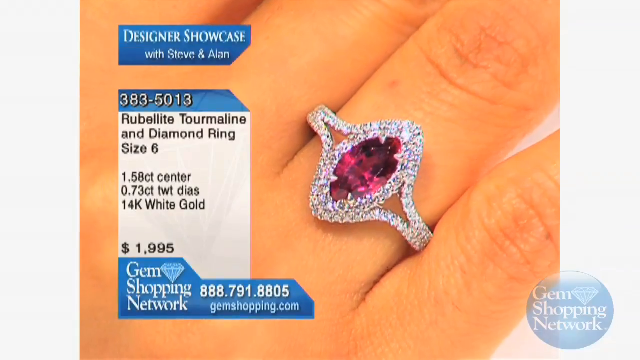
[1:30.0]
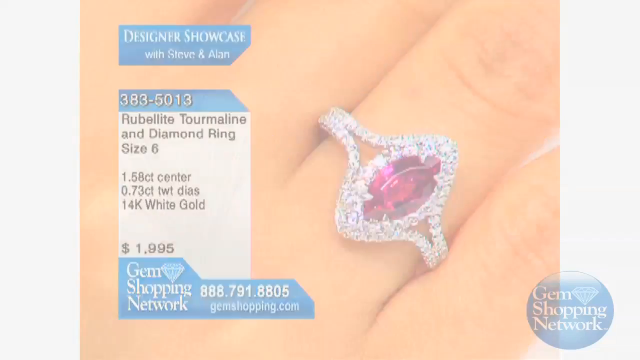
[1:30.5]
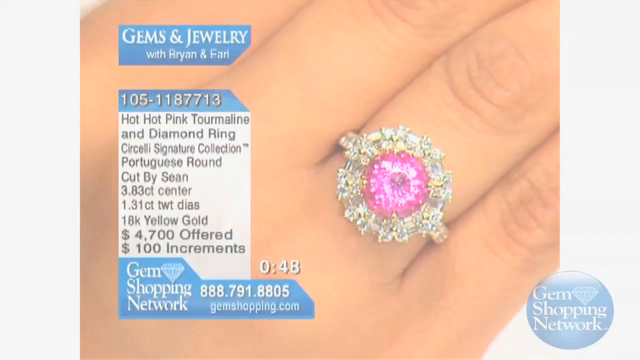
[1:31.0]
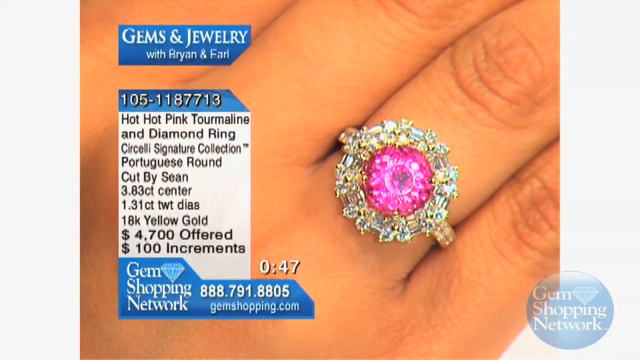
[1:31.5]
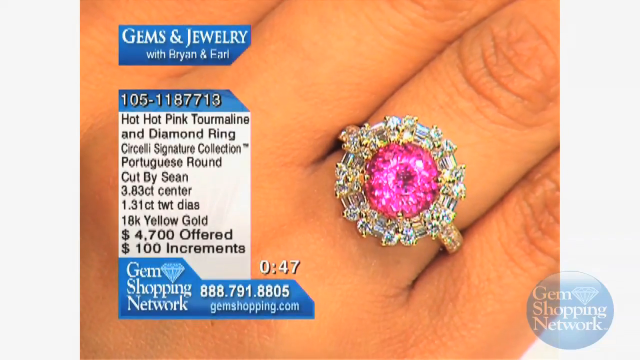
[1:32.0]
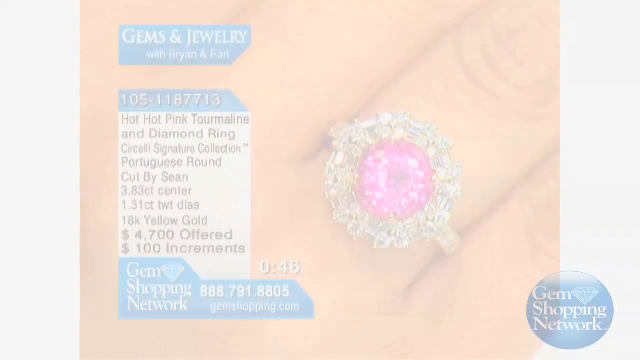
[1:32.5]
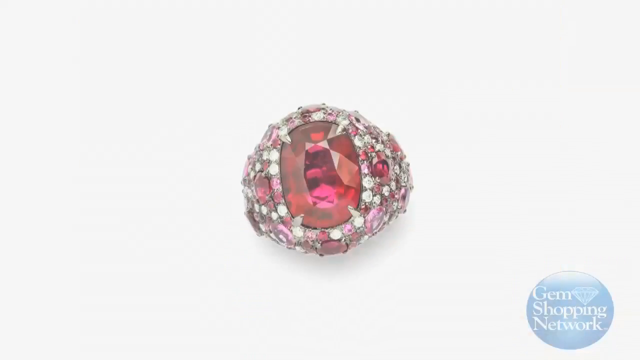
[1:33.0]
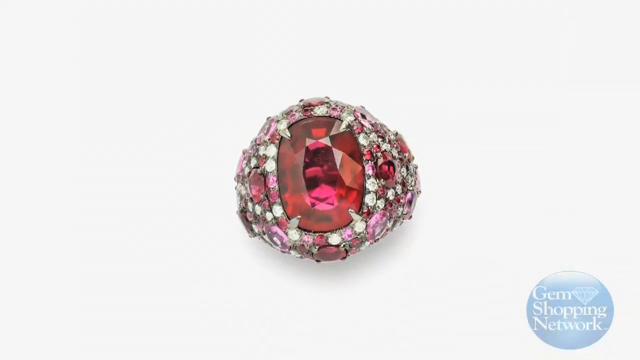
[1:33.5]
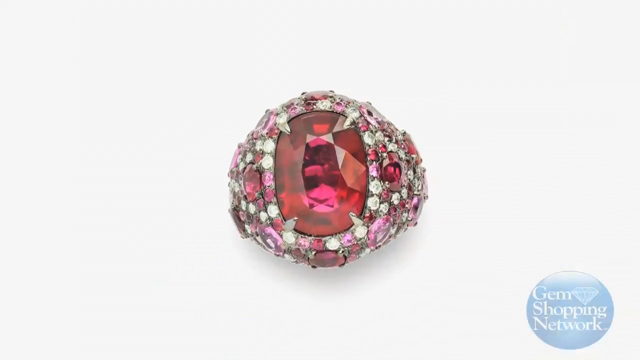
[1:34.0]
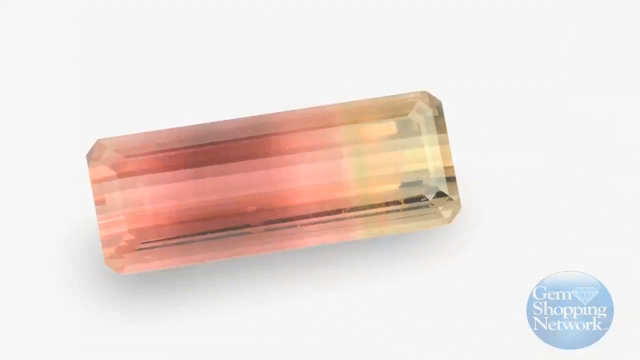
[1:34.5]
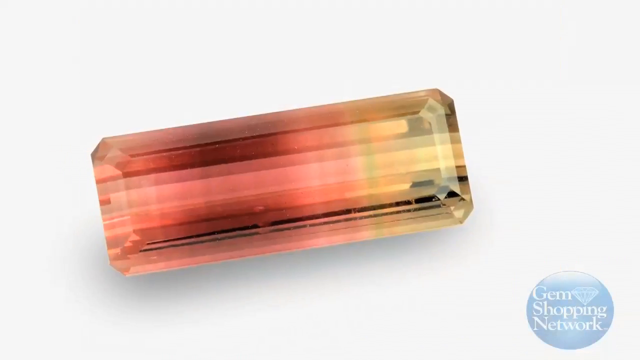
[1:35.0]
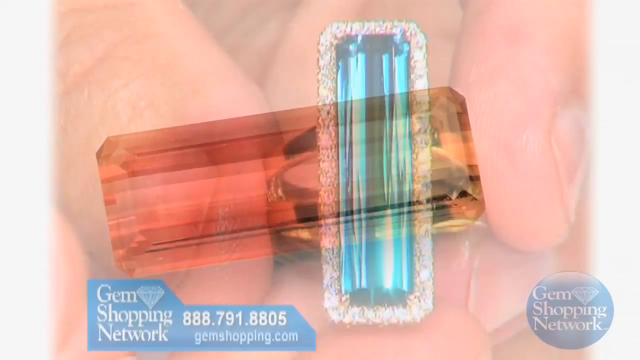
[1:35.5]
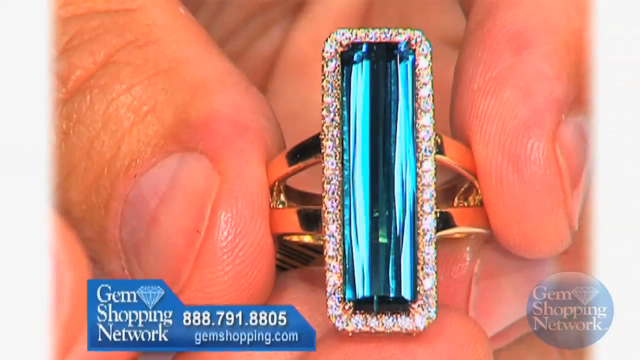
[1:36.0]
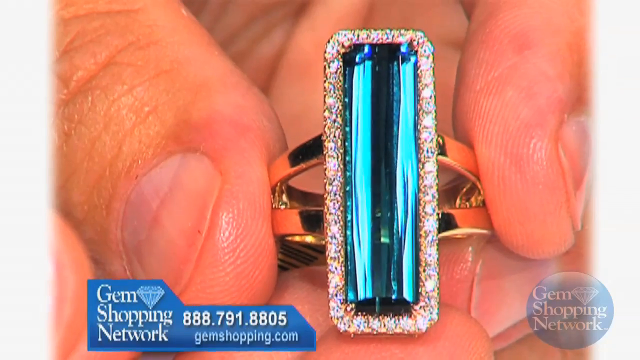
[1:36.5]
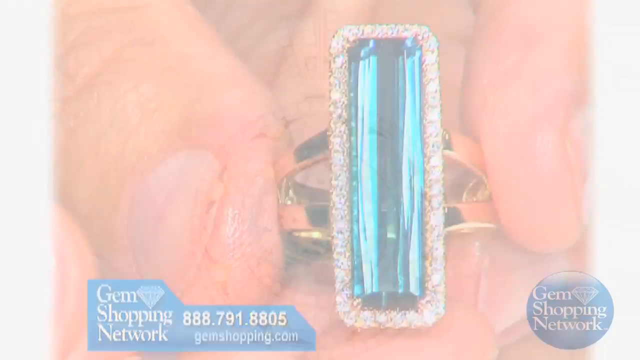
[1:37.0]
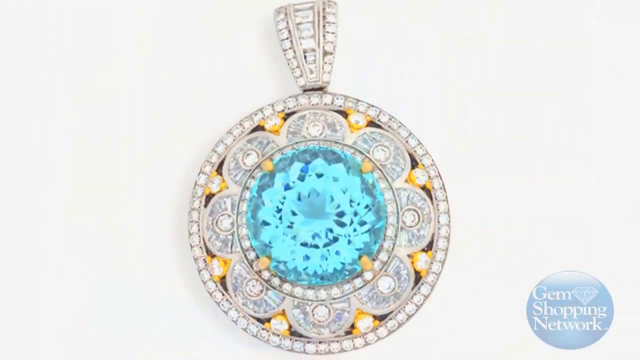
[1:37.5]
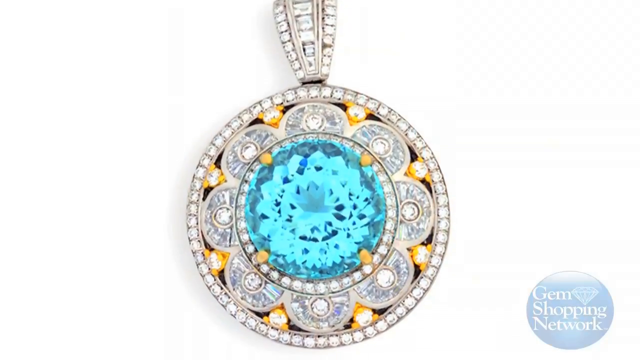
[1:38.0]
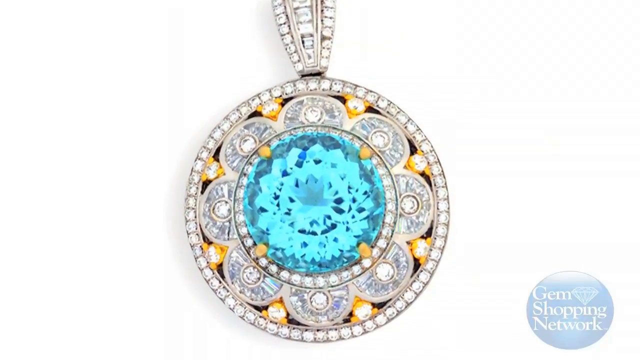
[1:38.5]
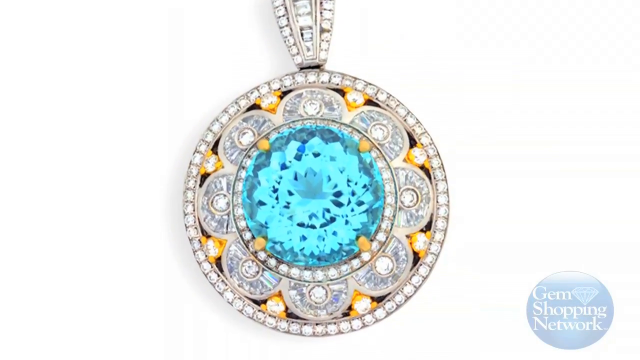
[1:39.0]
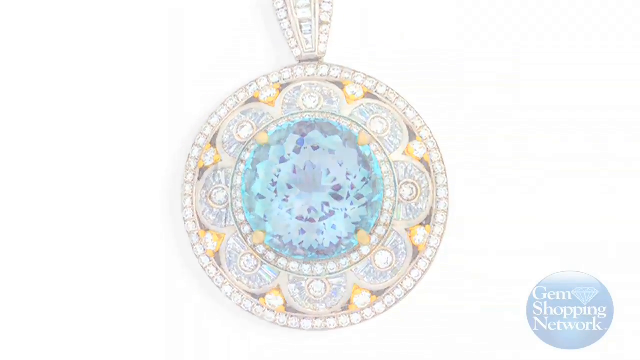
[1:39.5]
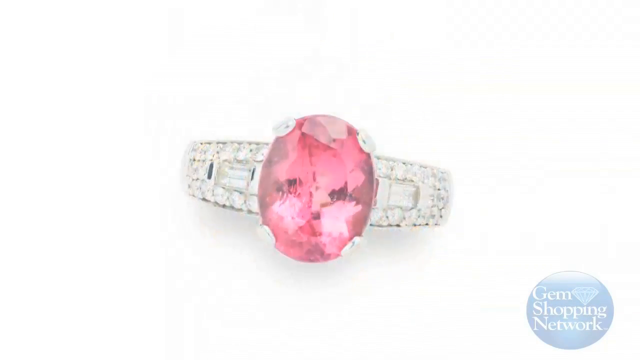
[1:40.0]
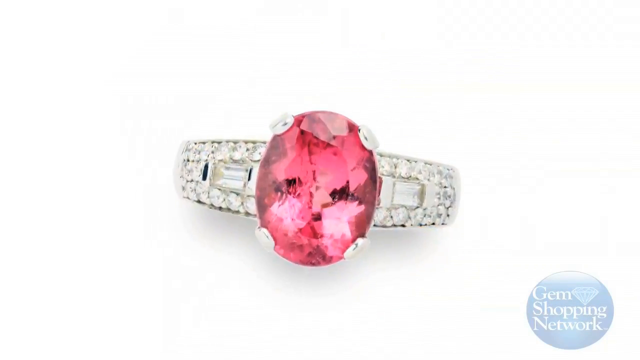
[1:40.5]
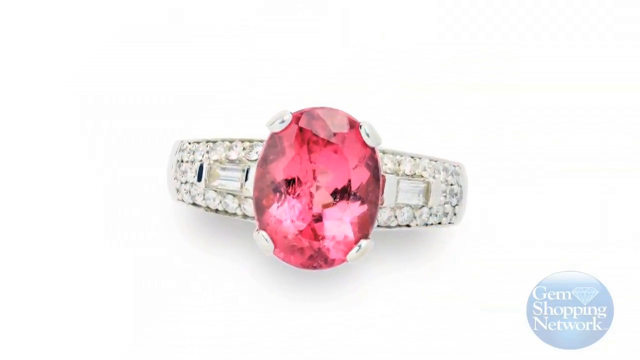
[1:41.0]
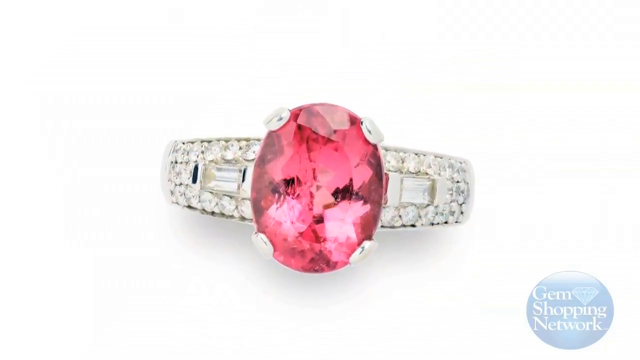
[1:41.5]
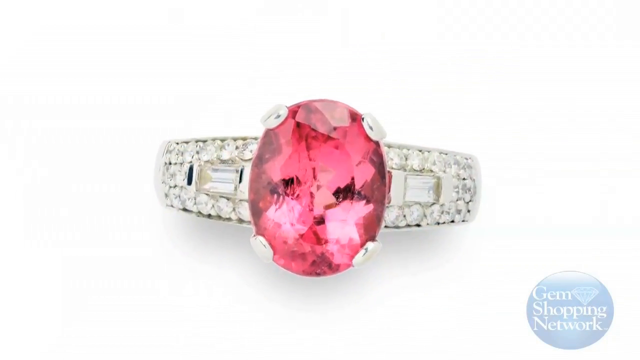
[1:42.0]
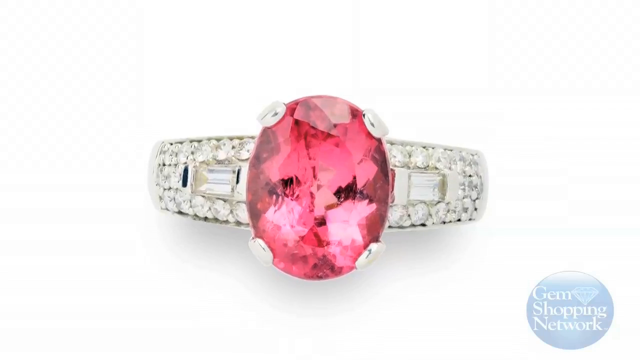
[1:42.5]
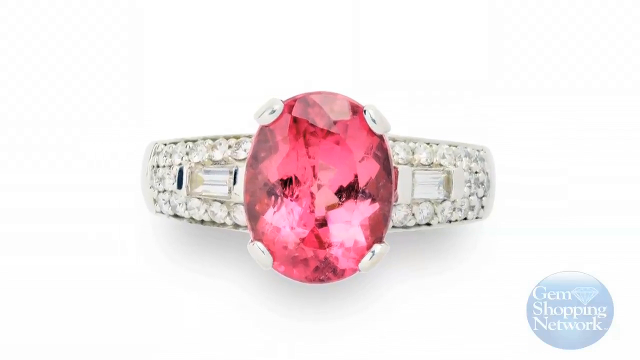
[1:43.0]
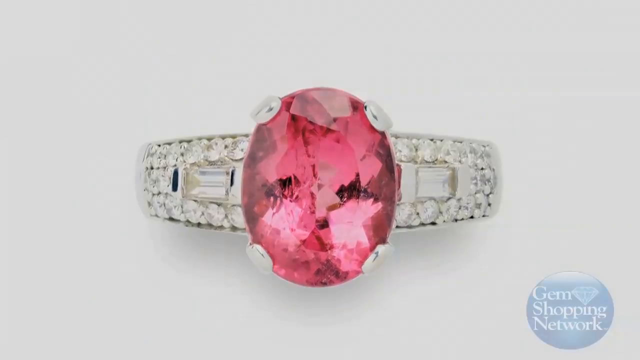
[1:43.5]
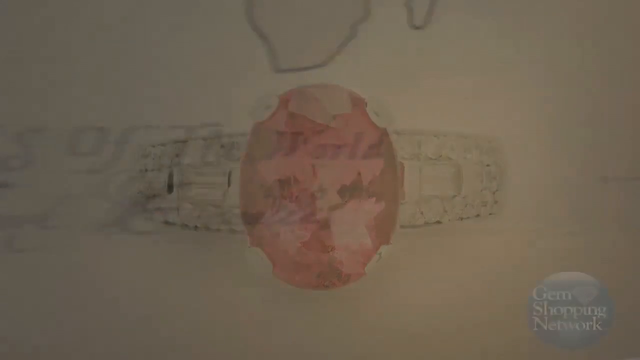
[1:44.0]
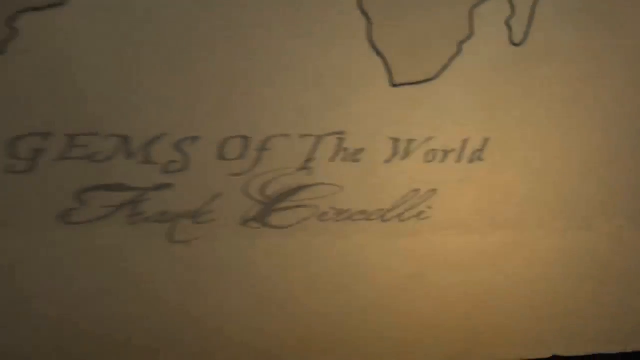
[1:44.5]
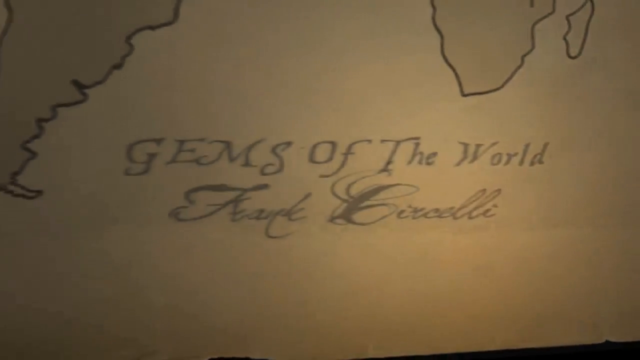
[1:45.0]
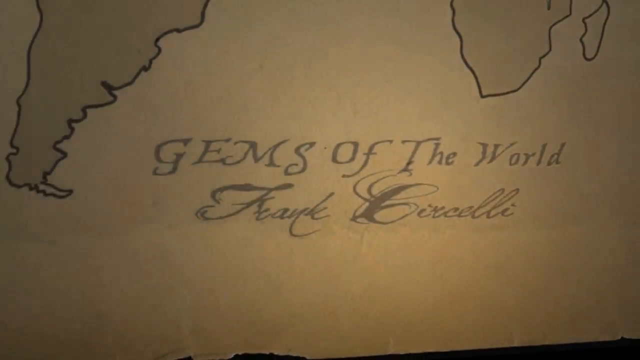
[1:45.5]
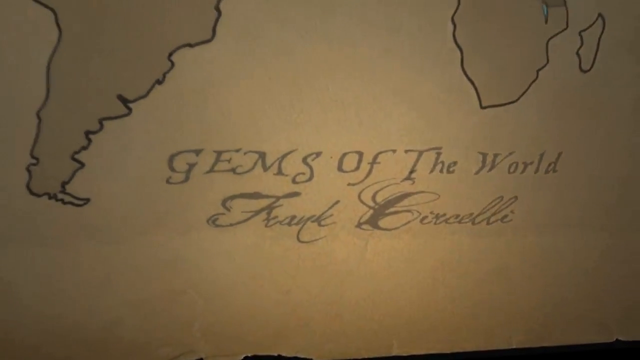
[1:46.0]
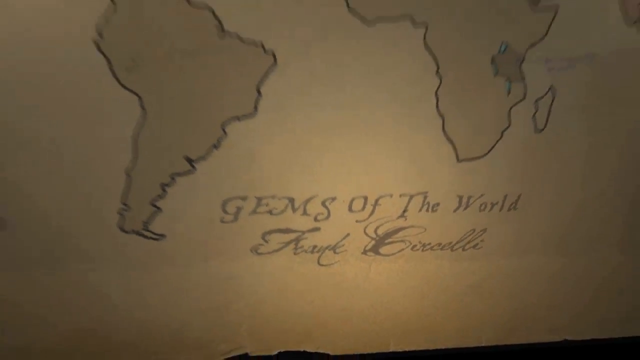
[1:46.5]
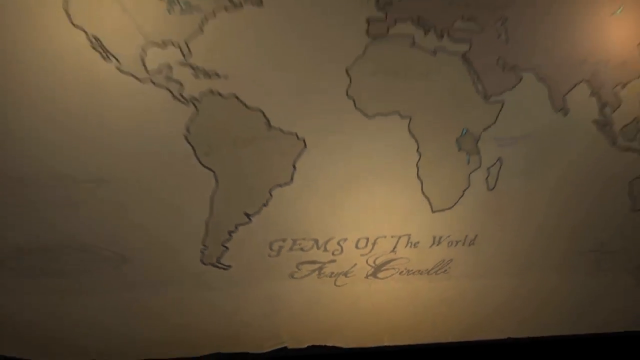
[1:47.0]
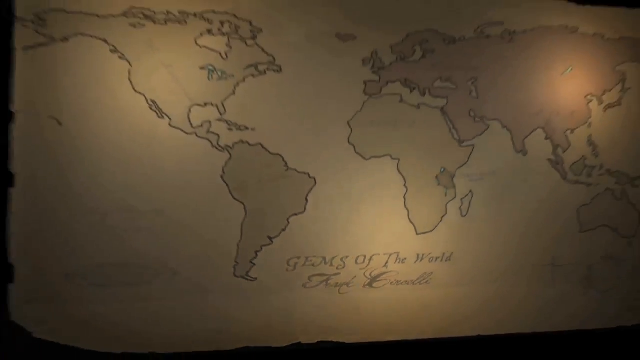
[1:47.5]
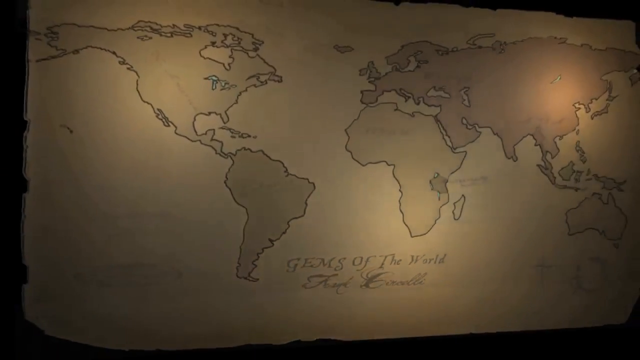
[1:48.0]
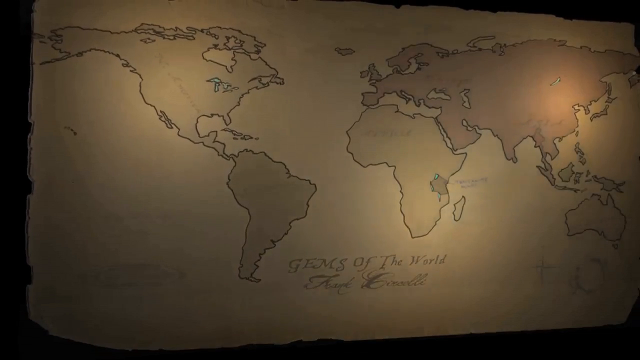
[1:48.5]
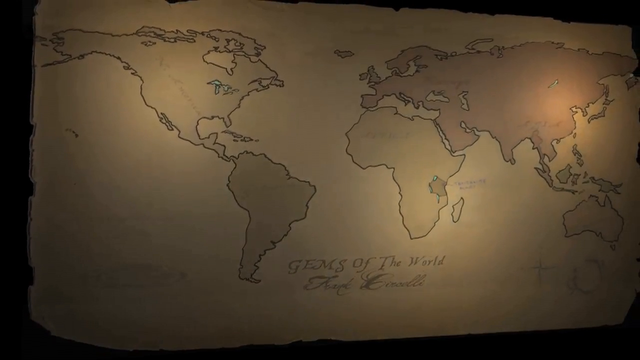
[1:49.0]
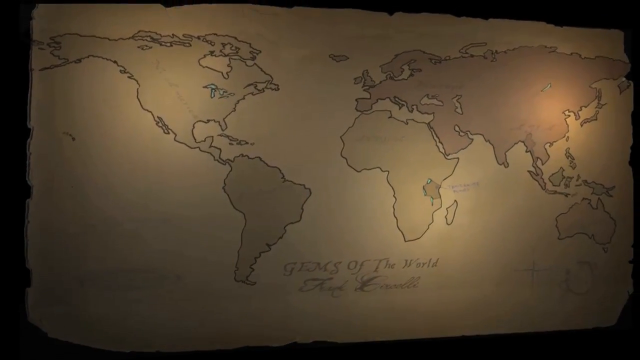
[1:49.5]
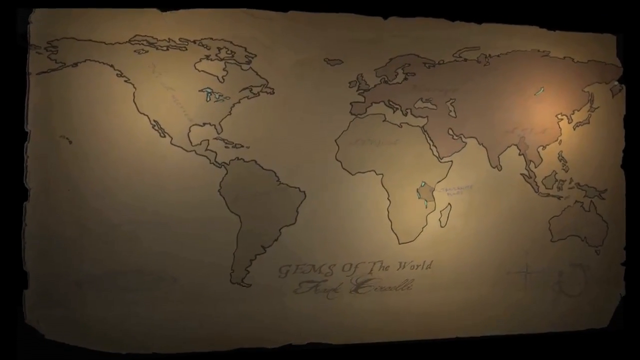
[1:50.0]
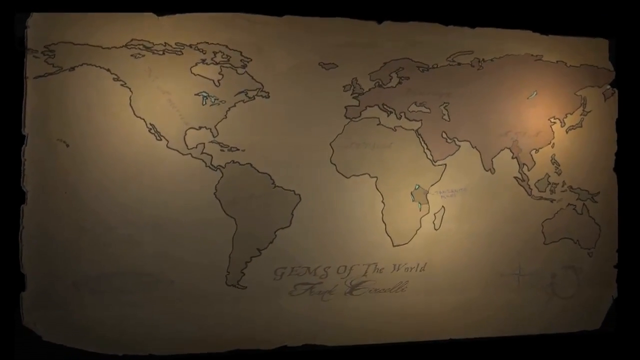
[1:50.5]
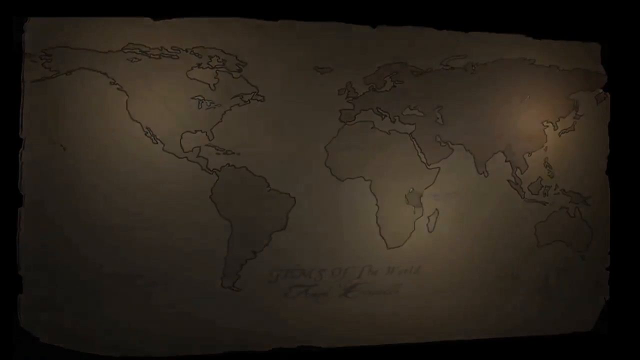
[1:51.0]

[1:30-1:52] A ring on a hand is a rublet tourmaline and diamond ring, size six, with a red or pink stone that looks kind of hot pink. This is the Gem Shopping Network, with the phone number 888-791-8805. The lady moves her hand around, and then a different ring appears on a different hand. The video then phases very quickly through different rings: a hot pink tourmaline and diamond ring for a split second, a red ring and a different color stone, a green ring that is possibly tourmaline, a pendant with a blue or green stone surrounded by diamonds or cubic zirconia, and another ring with a hot pink or red stone. The video then returns to Gems of the World and shows a map of all the continents, where it ends.